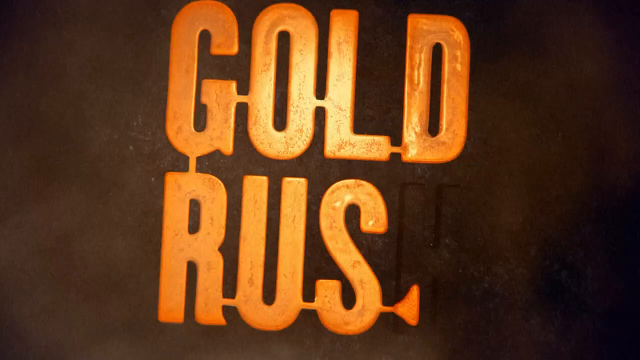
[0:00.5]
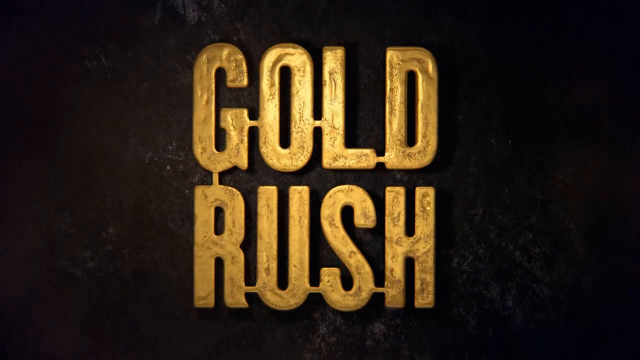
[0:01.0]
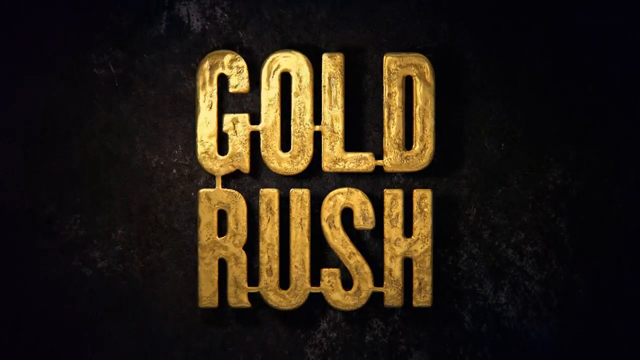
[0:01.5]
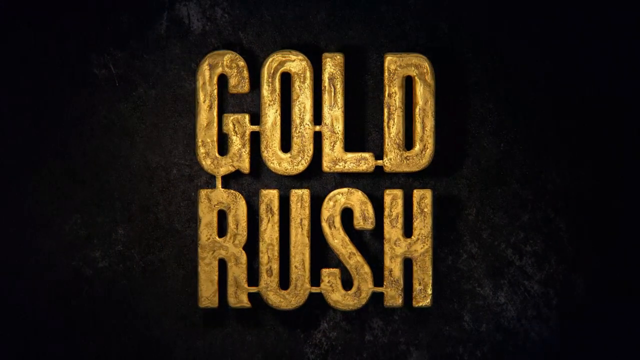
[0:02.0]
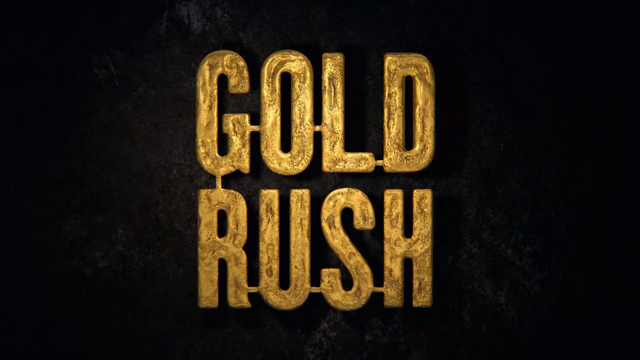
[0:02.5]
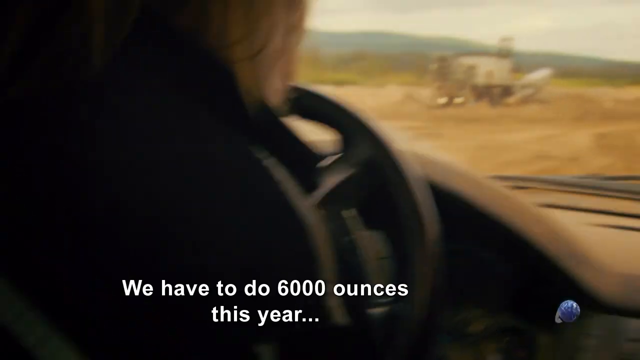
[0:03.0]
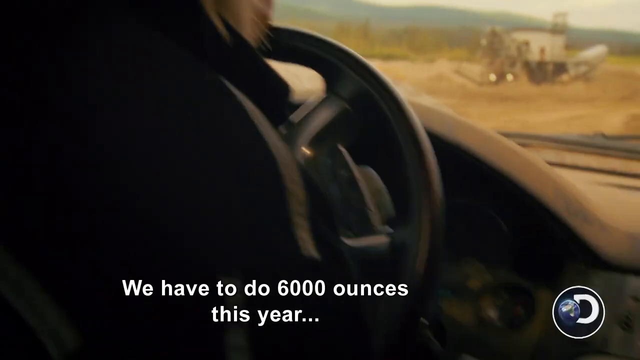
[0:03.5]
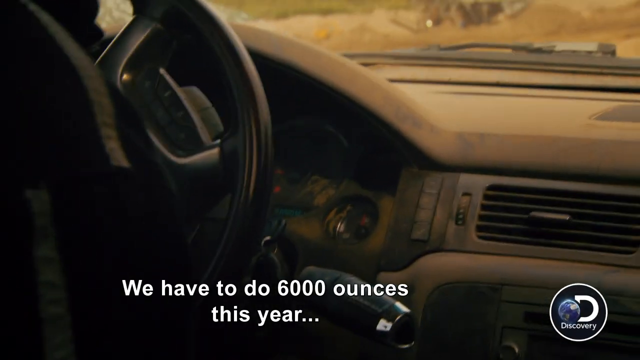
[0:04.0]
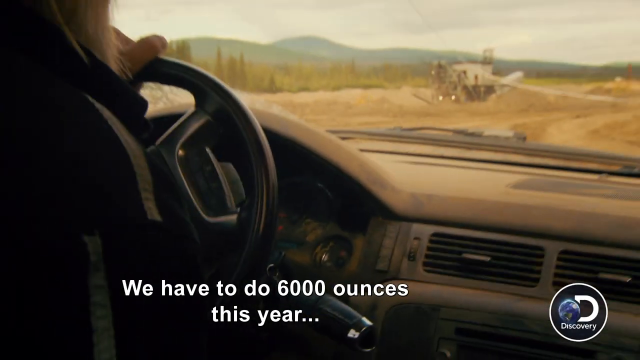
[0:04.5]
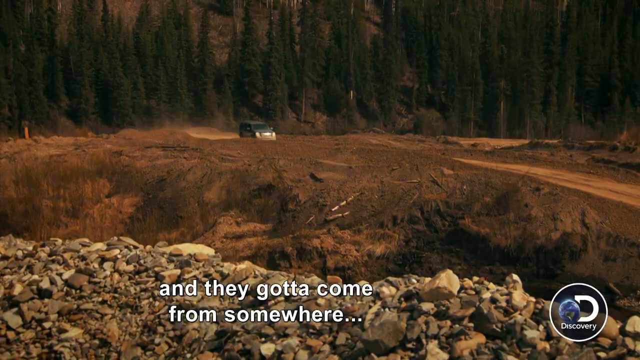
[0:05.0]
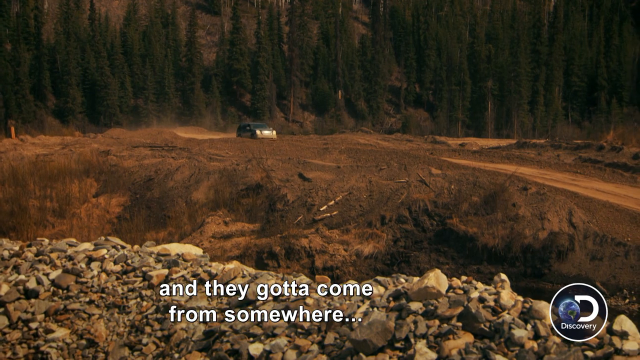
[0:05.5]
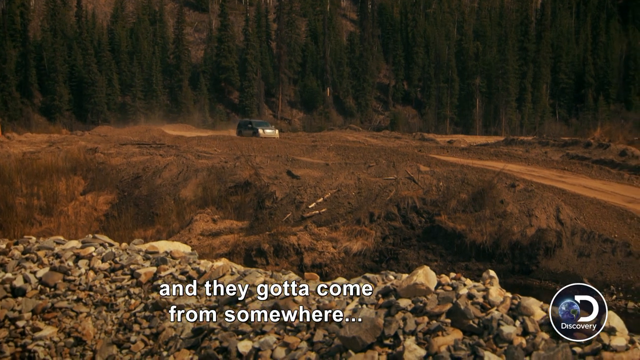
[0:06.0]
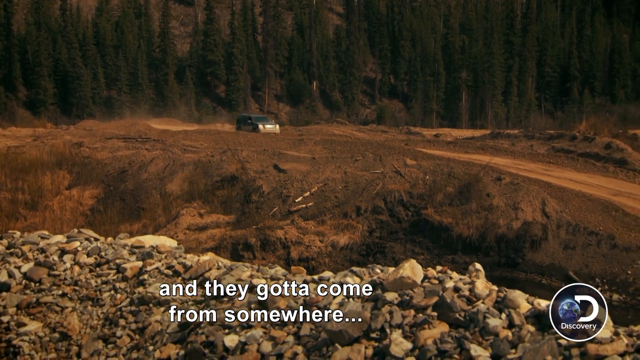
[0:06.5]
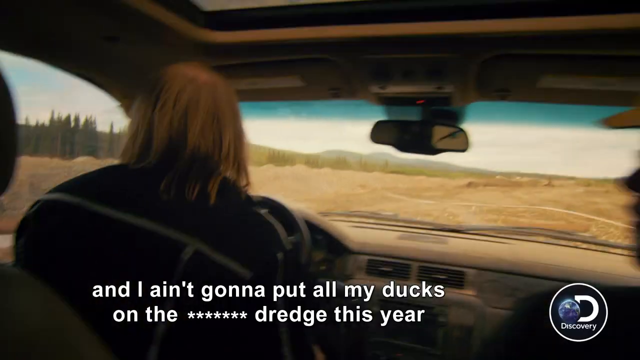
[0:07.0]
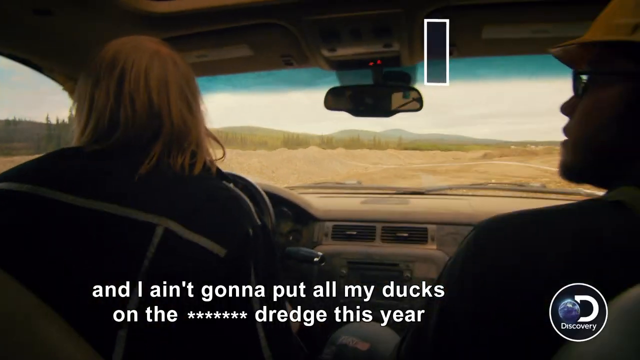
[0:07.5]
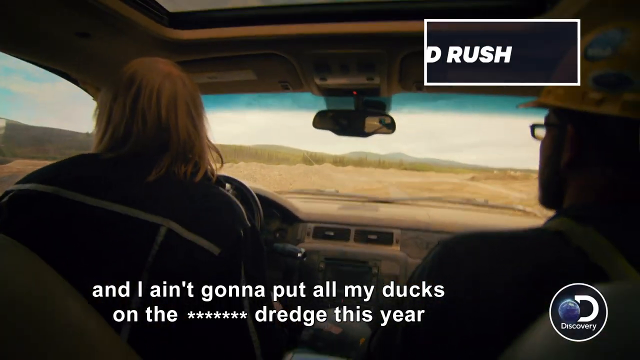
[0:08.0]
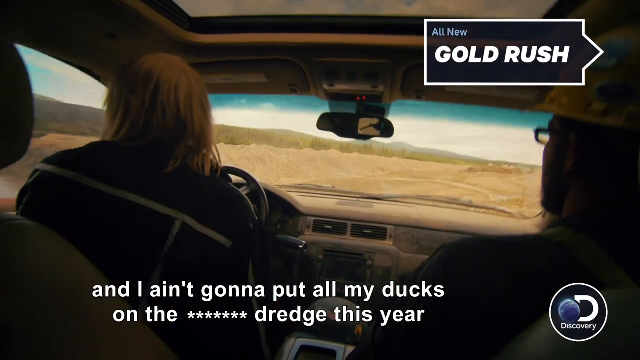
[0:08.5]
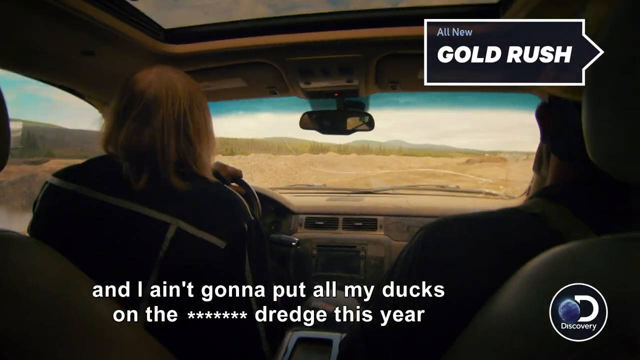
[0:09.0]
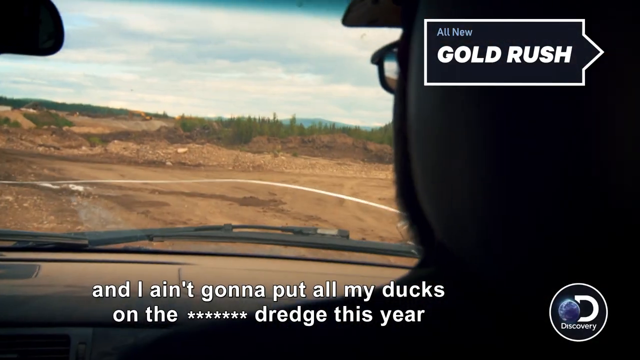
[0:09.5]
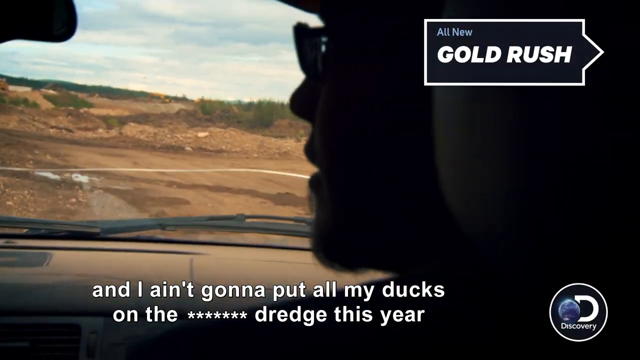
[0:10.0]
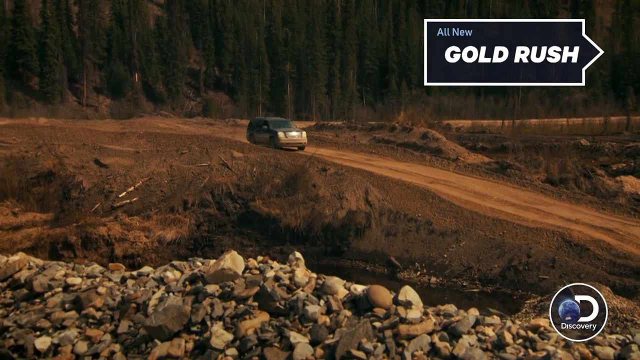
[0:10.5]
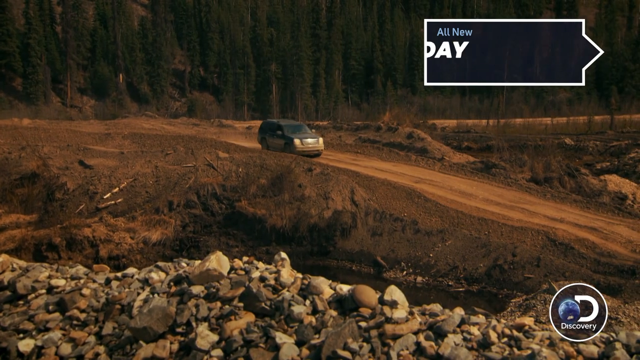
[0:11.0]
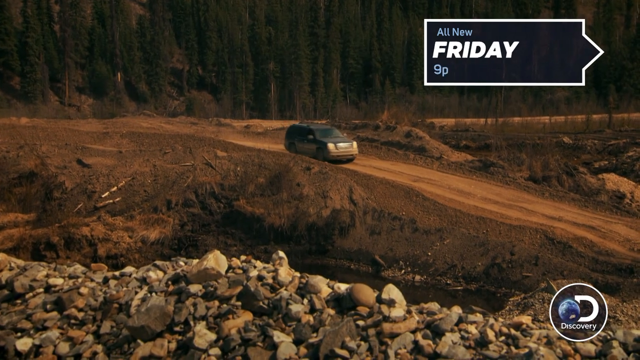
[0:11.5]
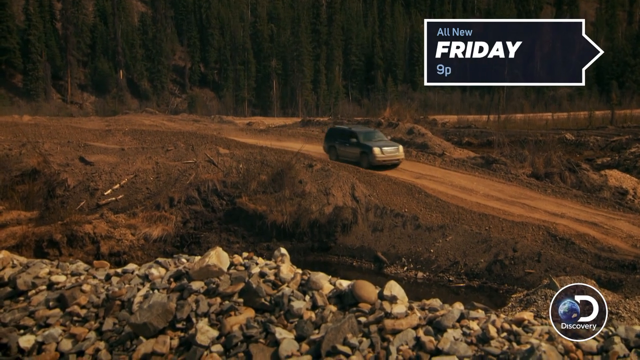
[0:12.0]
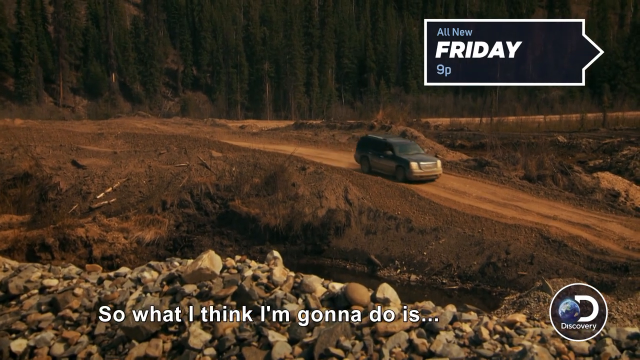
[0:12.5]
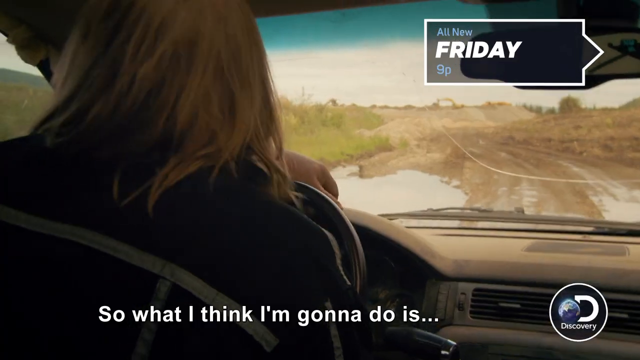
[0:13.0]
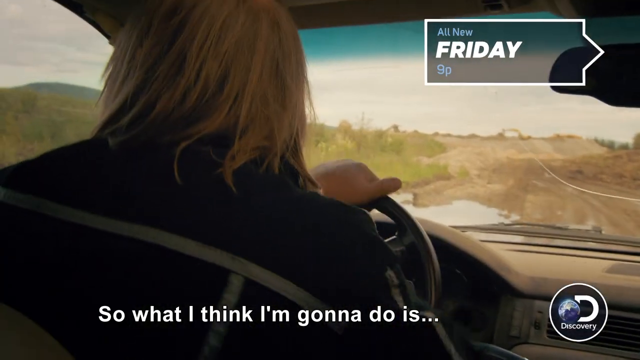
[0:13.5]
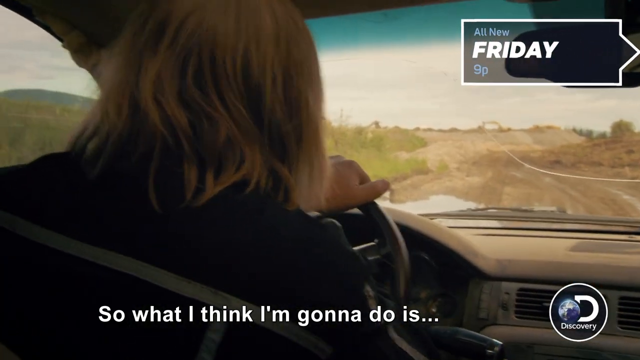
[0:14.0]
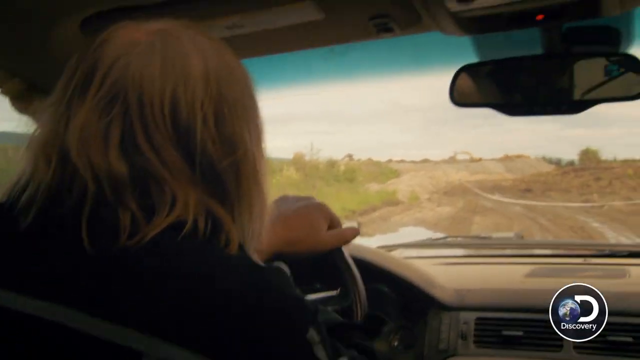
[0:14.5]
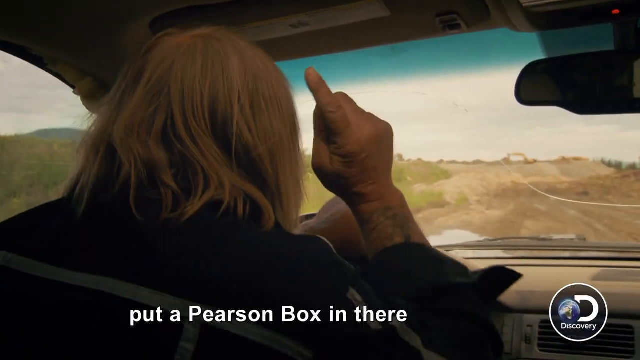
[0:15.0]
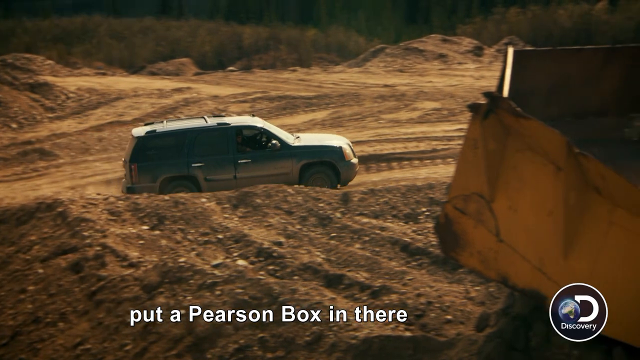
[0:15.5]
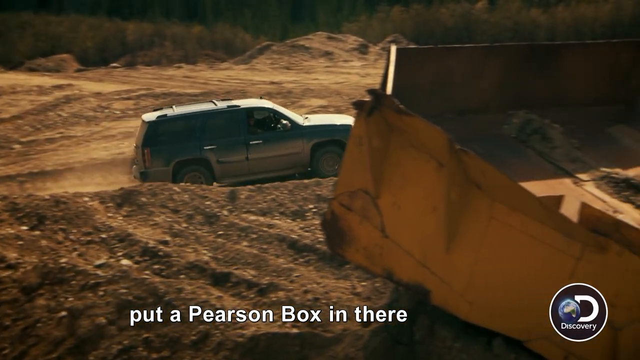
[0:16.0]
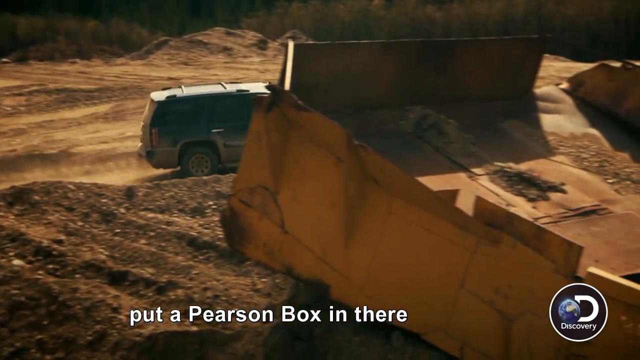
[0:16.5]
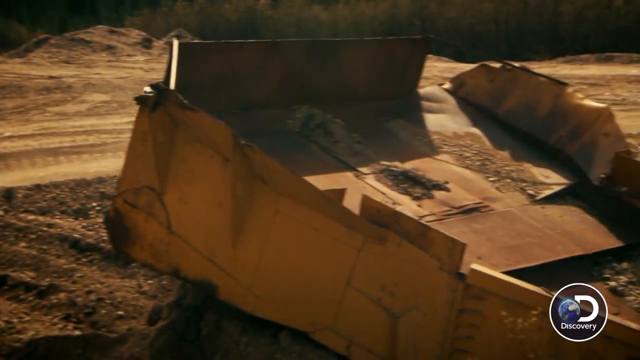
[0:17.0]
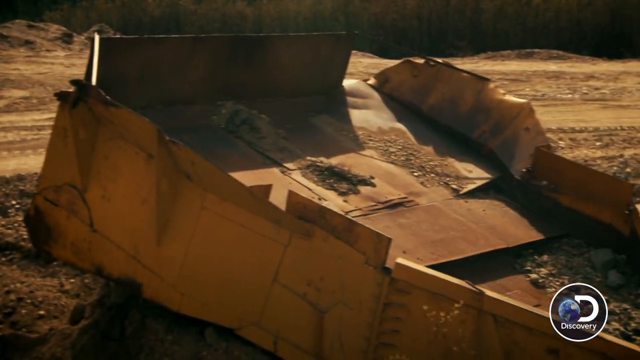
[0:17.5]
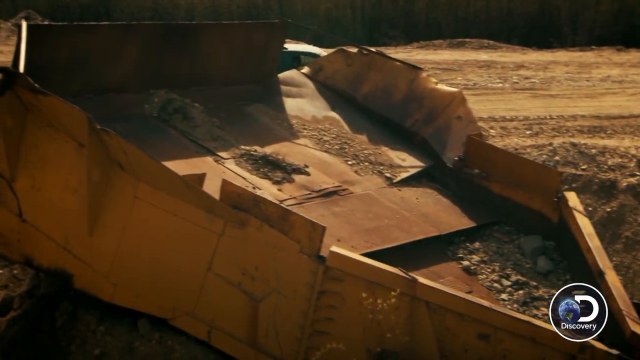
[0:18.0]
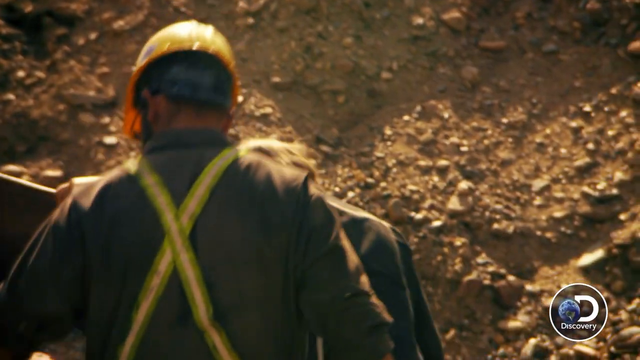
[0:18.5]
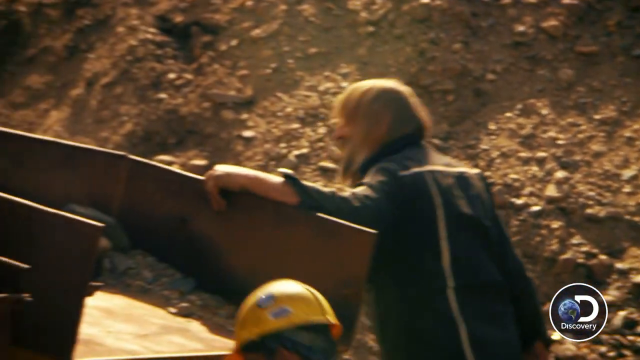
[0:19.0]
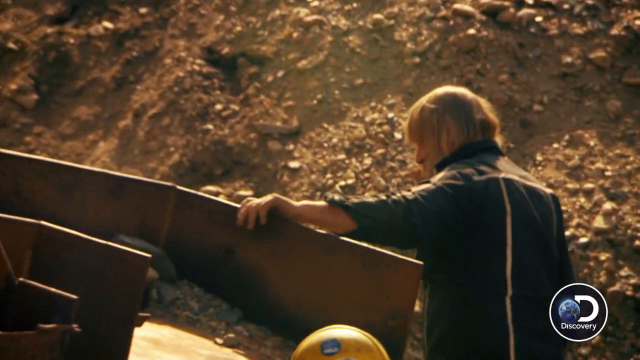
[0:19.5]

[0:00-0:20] Gold words reading "Gold Rush" appear on a black background; they look like they are made of melted real gold. The view switches to the interior of a car, focused on the dashboard, the windshield and the steering wheel a man is steering. White text at the bottom says "We have to do 6,000 ounces this year..." Next comes a zoomed-out view outside the car of a barren landscape: there are trees in the background, but the foreground looks like things have been torn down, with some type of mining operation going on. White text at the bottom says "and they got to come from somewhere..." Back inside the car, the camera is clearly positioned in the back seat, showing the backs of two men's heads; the man on the right wears glasses. White text at the bottom reads "and I ain't going to put all my ducks on the ******** dredge this year." The road is clearly bumpy, the vehicle is shaking, and a large crack runs horizontally across the windshield. The view zooms out to the exterior of the vehicle, then returns to the interior with white text at the bottom: "So what I think I'm going to do is ... put a Pearson box in there." An exterior view shows the vehicle is clearly an SUV, pulling up to what appears to be a mining site with some large equipment, where men wearing hard hats are working on the equipment.